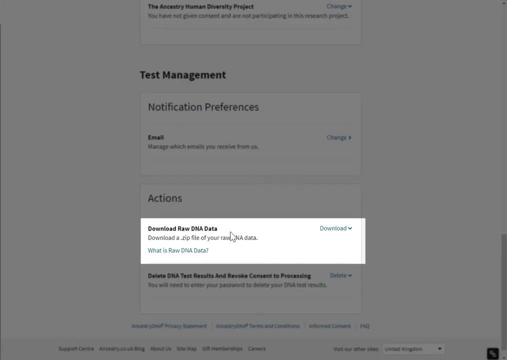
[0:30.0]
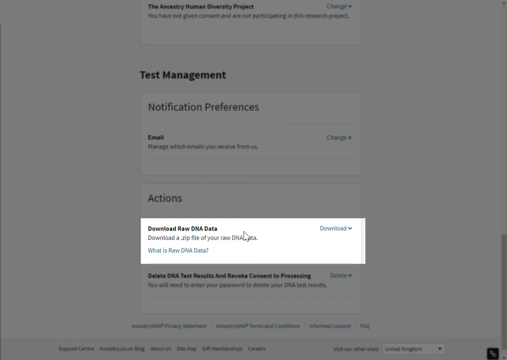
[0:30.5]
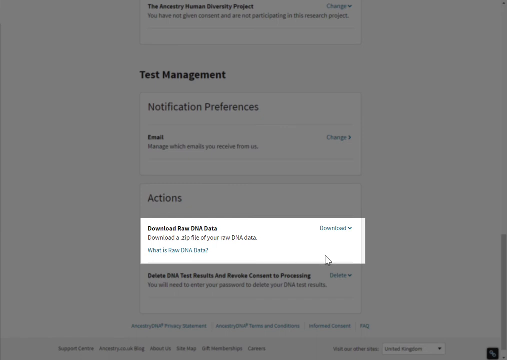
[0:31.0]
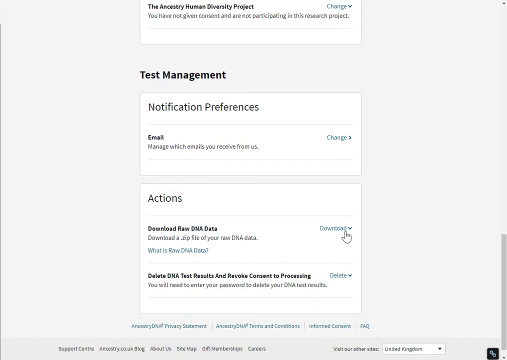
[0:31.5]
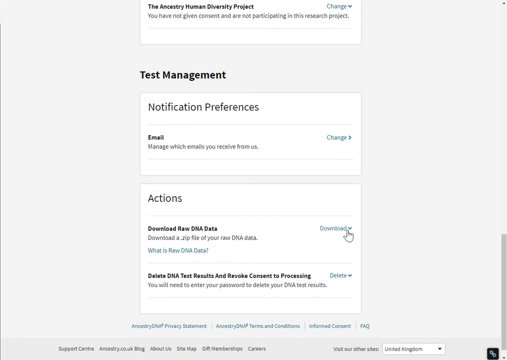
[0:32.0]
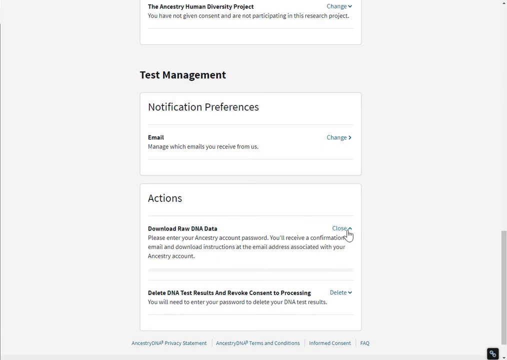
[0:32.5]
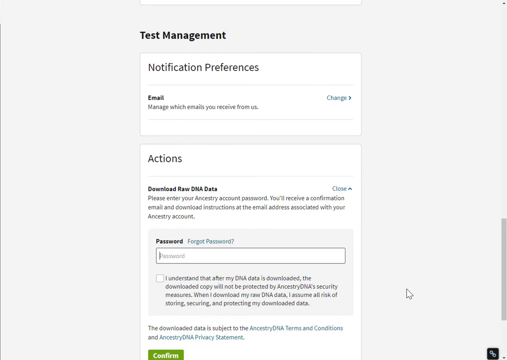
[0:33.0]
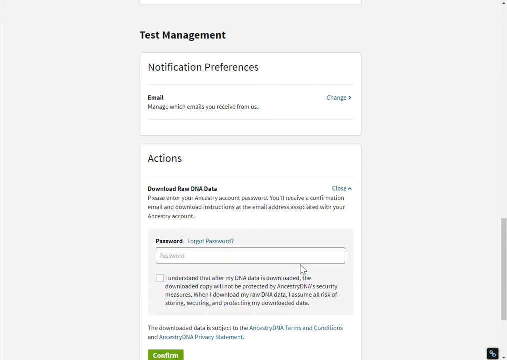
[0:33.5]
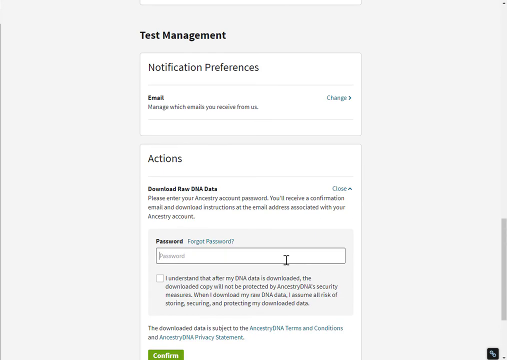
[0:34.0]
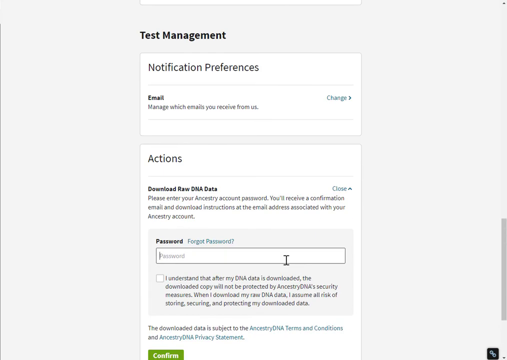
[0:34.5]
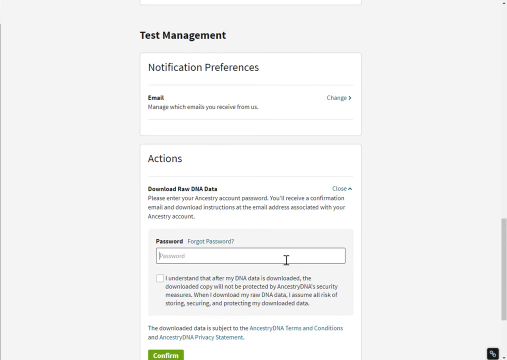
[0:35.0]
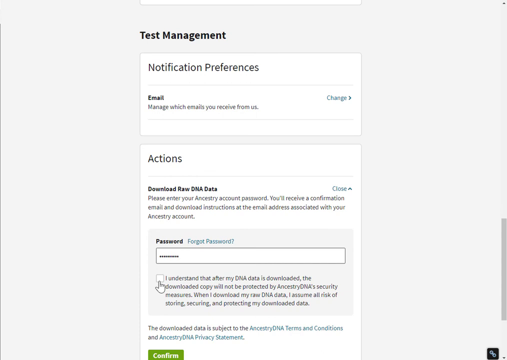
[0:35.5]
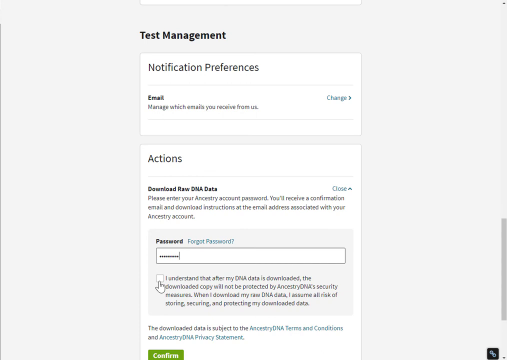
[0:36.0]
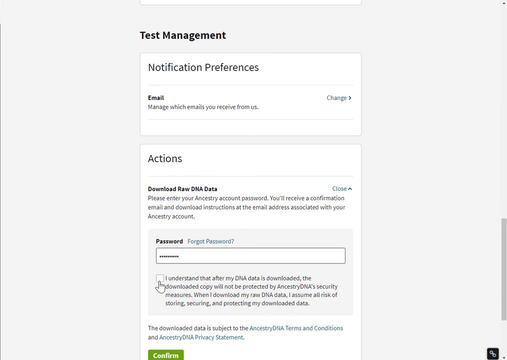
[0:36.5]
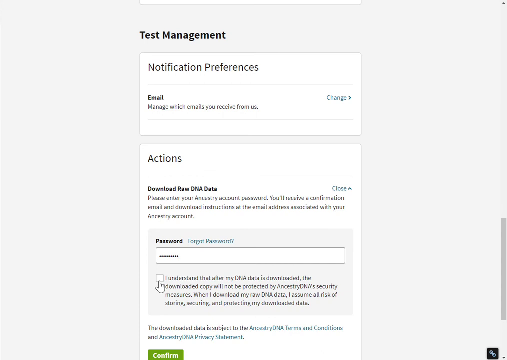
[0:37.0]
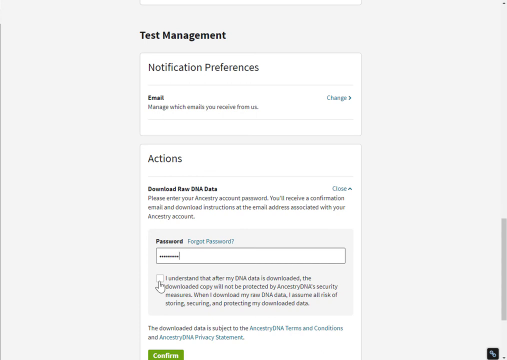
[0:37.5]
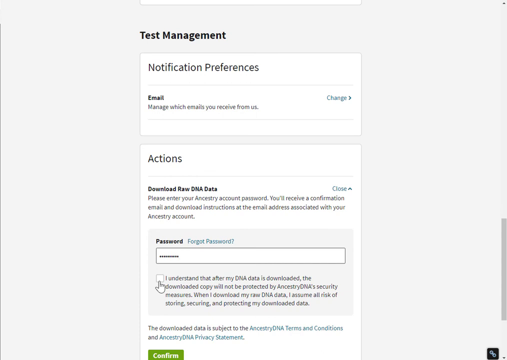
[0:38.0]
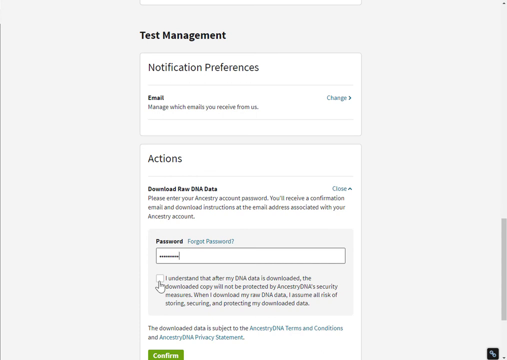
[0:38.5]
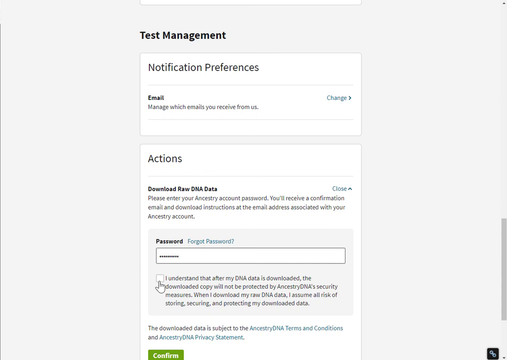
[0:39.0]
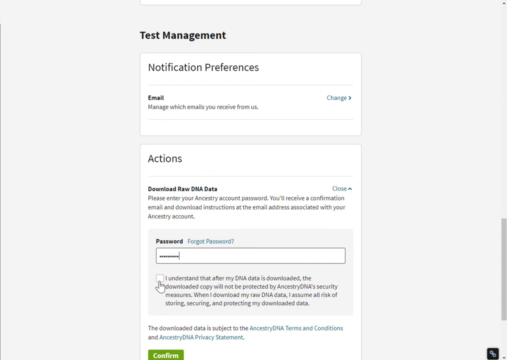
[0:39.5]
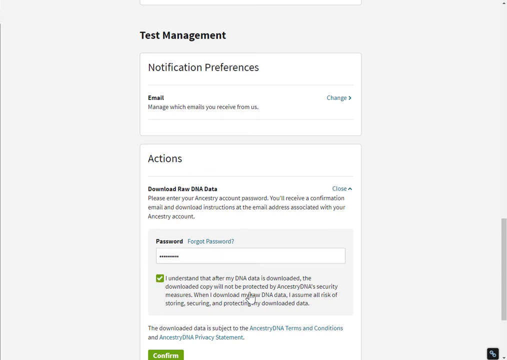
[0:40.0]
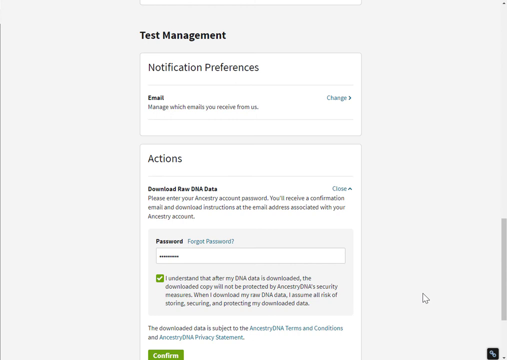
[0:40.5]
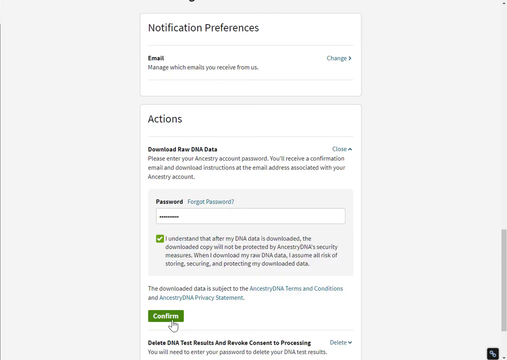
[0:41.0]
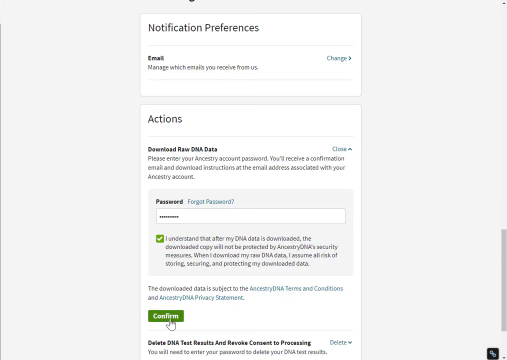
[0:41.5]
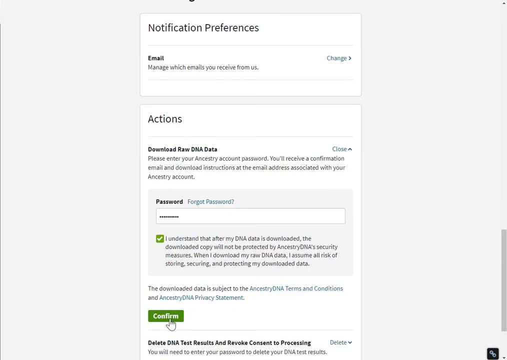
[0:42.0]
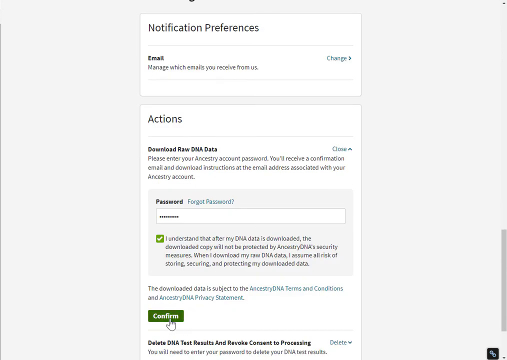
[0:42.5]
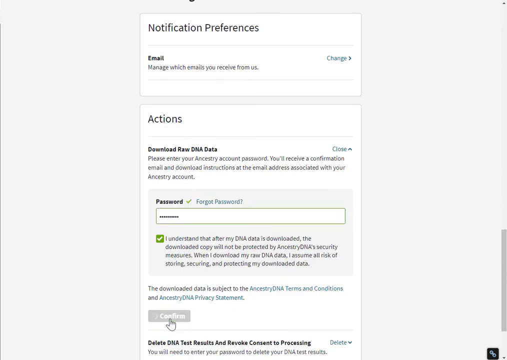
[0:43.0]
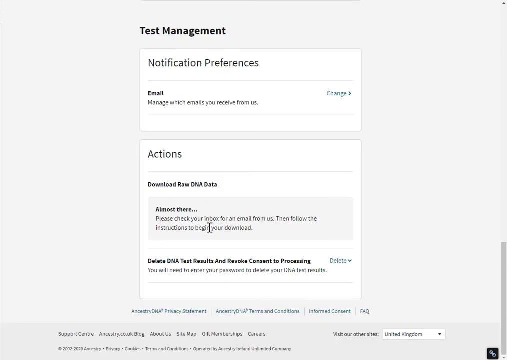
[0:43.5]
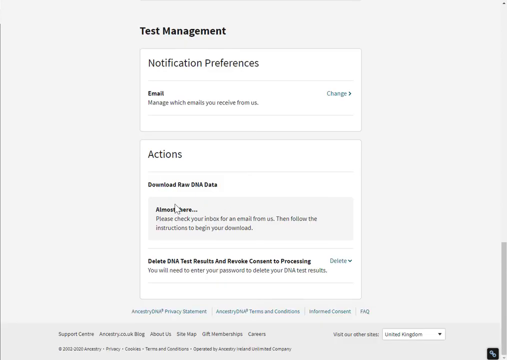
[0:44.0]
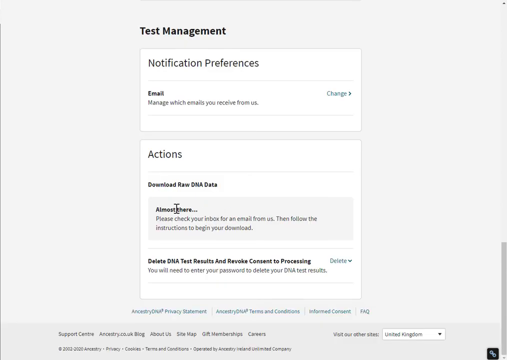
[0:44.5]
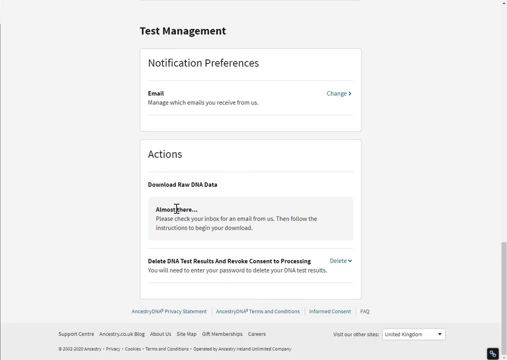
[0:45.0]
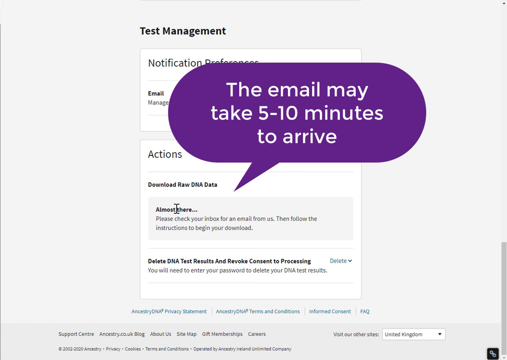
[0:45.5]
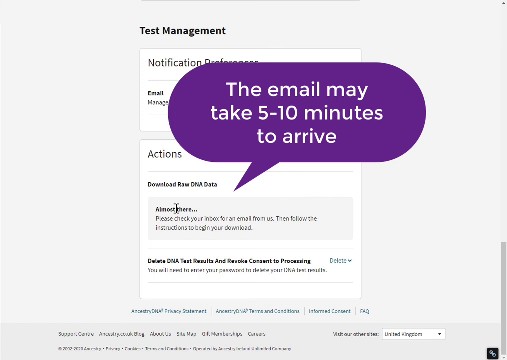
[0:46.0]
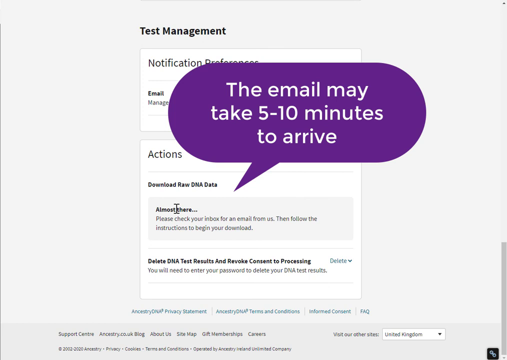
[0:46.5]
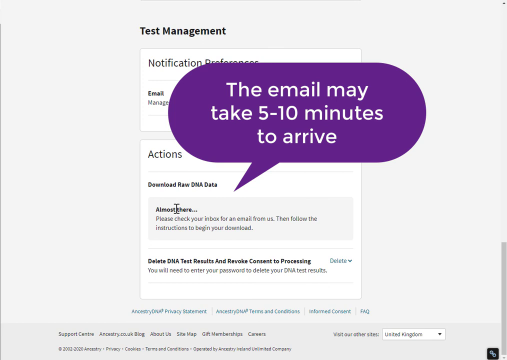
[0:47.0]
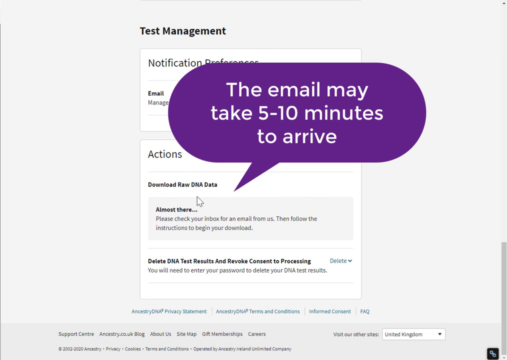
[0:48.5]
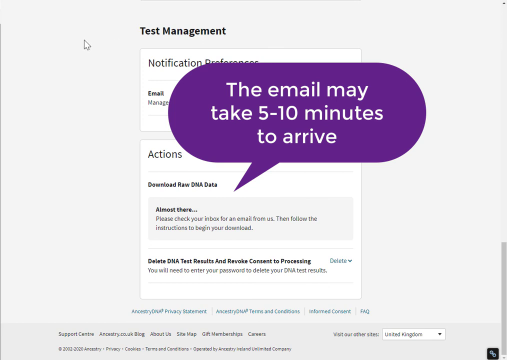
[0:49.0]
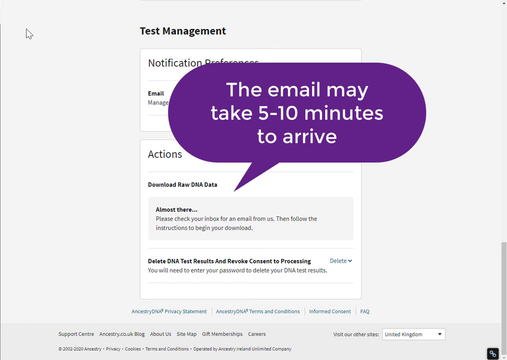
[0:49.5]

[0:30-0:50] A white pop-up box says "download raw DNA data" in bold, and underneath it says "download a zip file with your raw DNA data." At the top right of this box is blue text that says "download," with an arrow pointing down to its right, possibly for more options. "What is raw DNA data" is at the bottom left. They click download, and a password text field appears with the cursor blinking in it. Beneath it, text says "I understand that after my DNA data is downloaded the download copy will not be protected" next to a checkbox that is not selected. Apparently the password is then typed, appearing as dots so it cannot be read. The cursor moves over the checkbox and clicks it, turning it green. A green confirm button at the bottom is clicked. A little gray box says "almost there" and "please check your inbox for email from us." Underneath is "delete DNA test results," with a delete option and drop-down to its right. A large purple caption pops up above, saying the email could take up to five to ten minutes to arrive. The arrow is then moved to the top left.